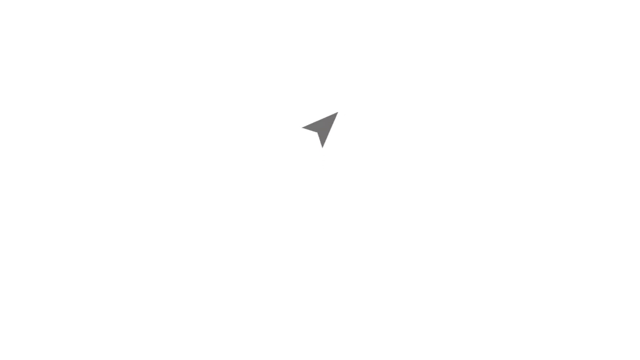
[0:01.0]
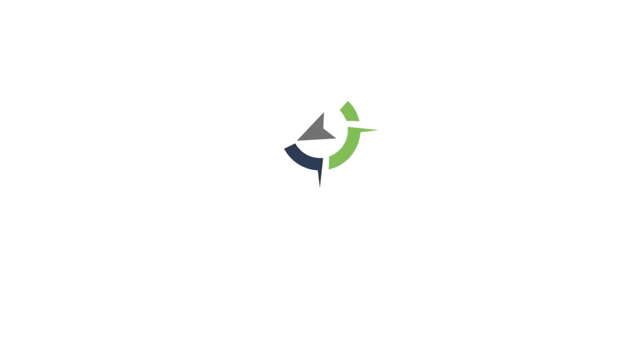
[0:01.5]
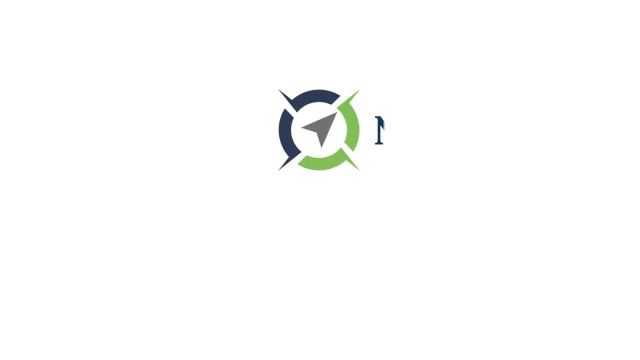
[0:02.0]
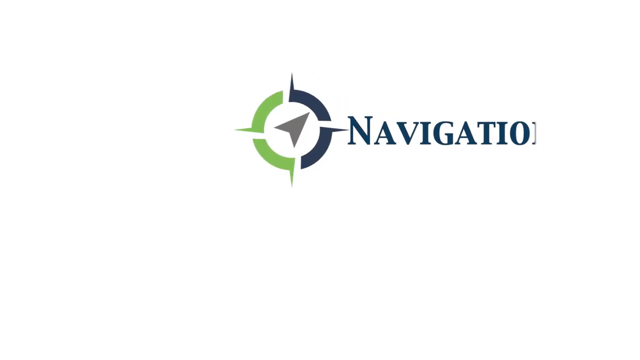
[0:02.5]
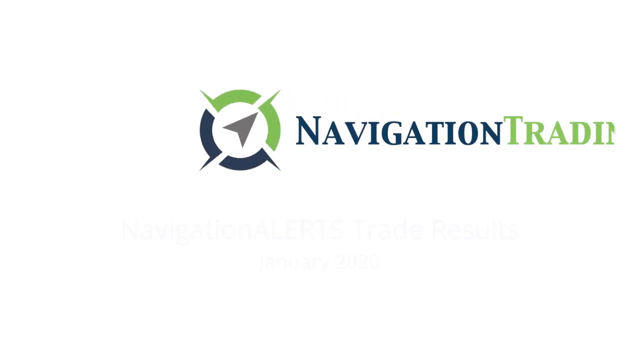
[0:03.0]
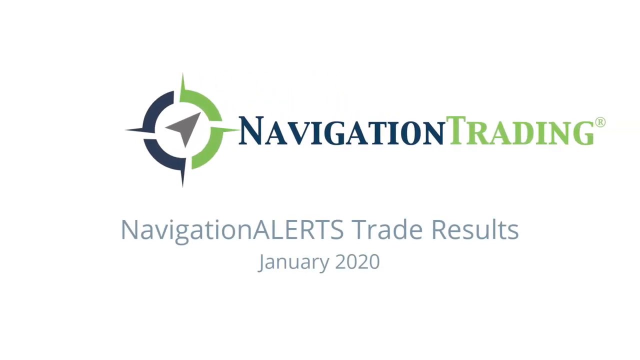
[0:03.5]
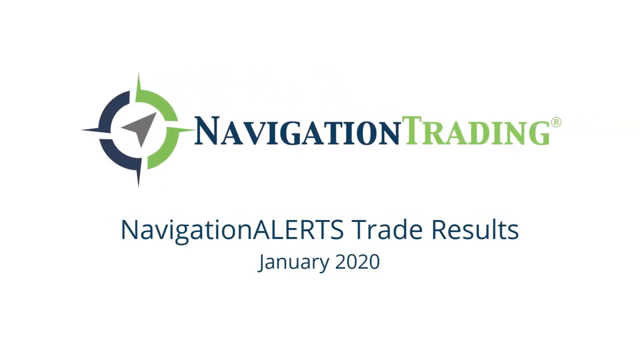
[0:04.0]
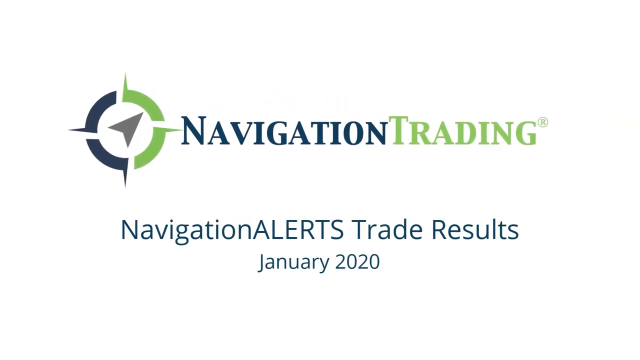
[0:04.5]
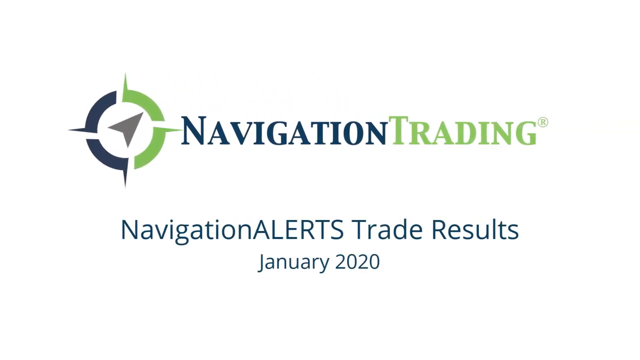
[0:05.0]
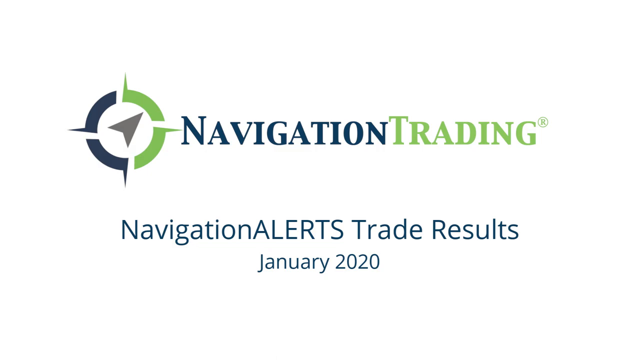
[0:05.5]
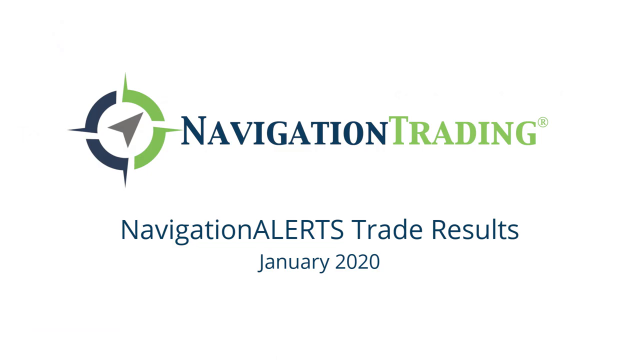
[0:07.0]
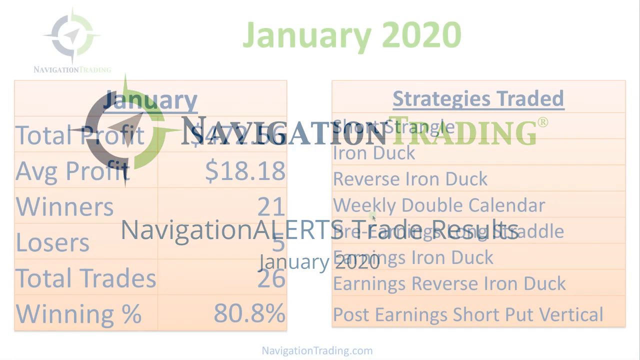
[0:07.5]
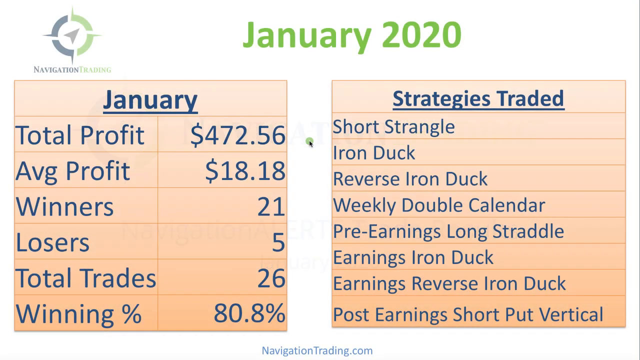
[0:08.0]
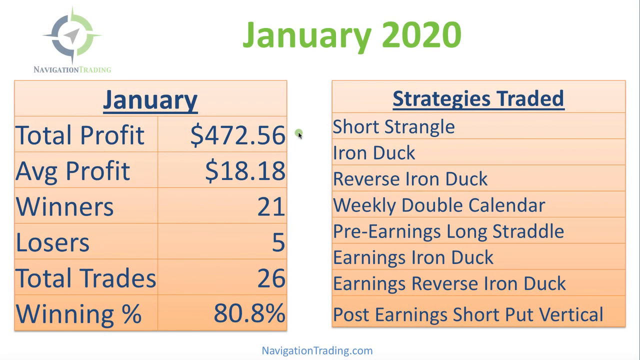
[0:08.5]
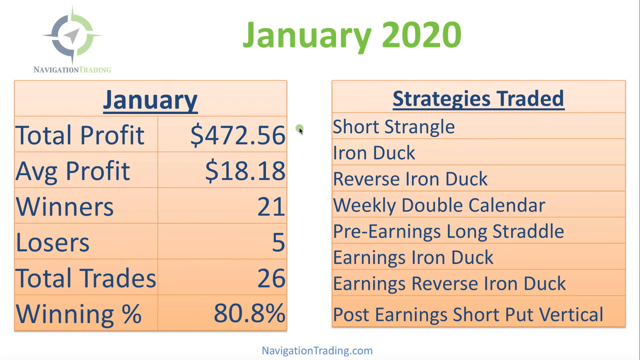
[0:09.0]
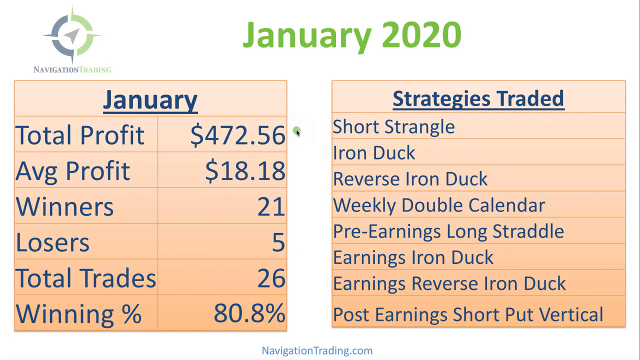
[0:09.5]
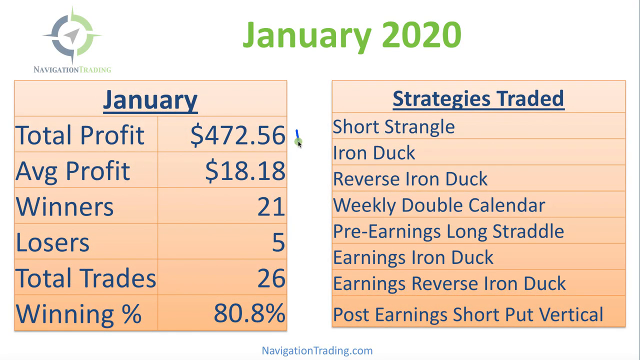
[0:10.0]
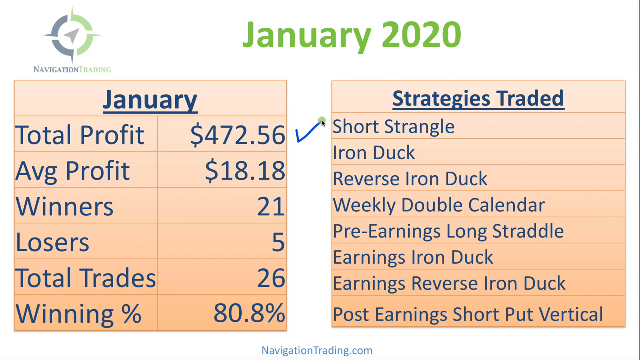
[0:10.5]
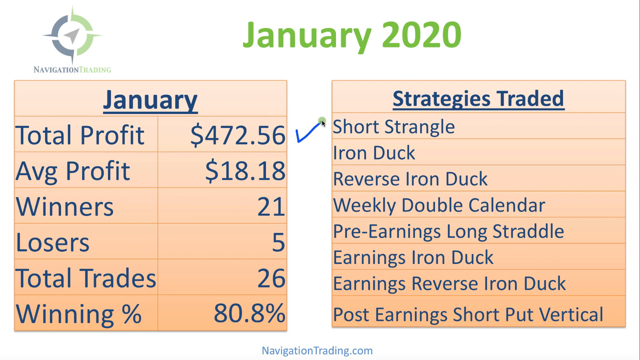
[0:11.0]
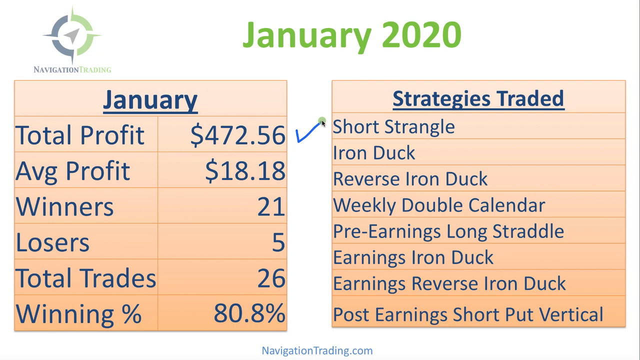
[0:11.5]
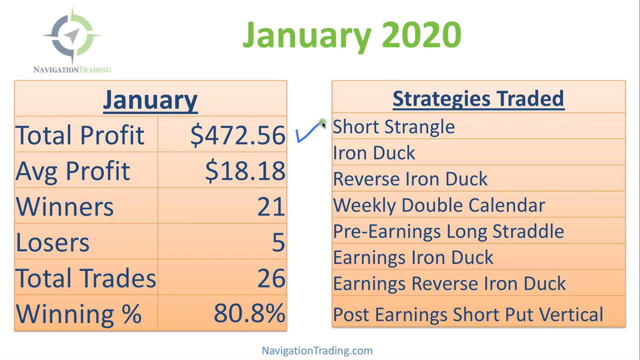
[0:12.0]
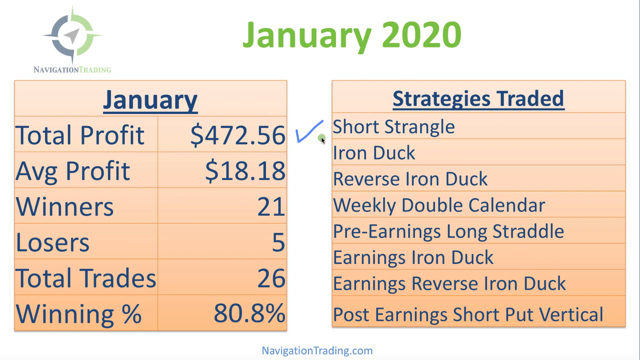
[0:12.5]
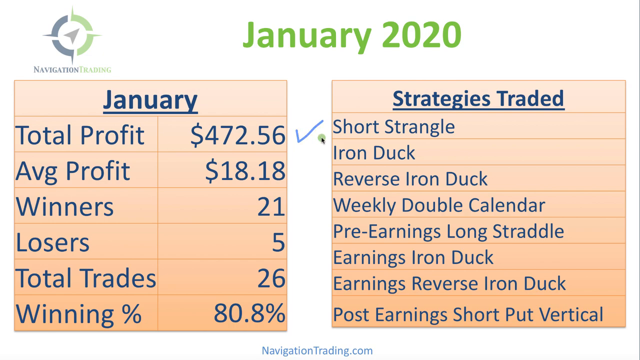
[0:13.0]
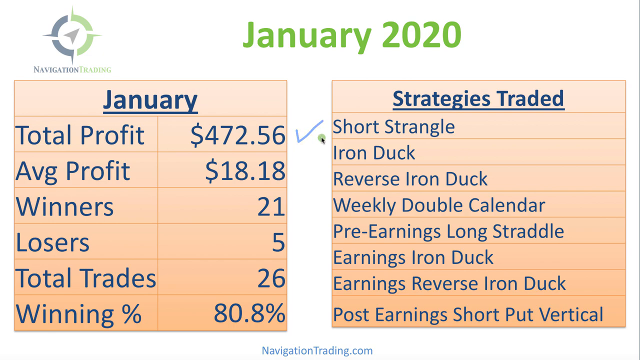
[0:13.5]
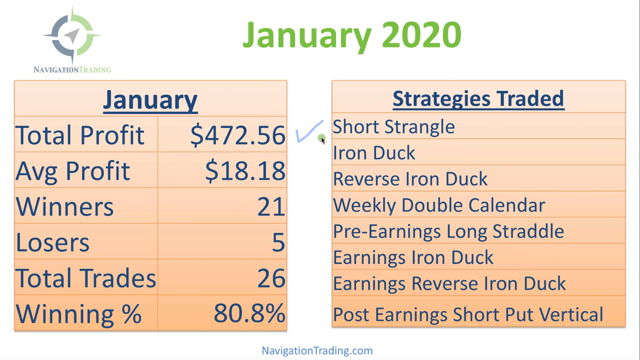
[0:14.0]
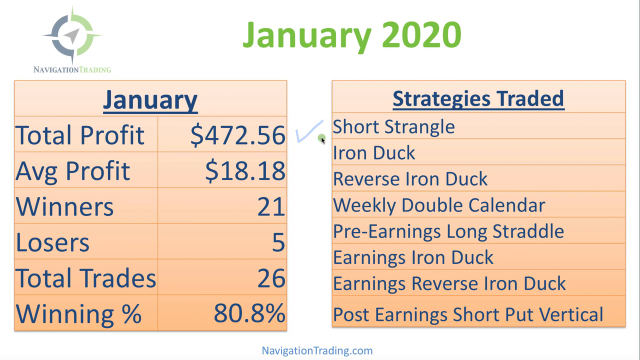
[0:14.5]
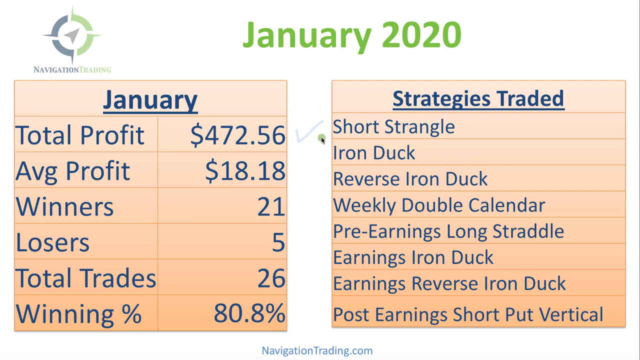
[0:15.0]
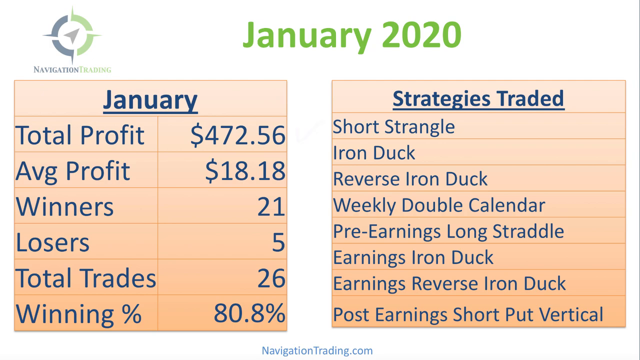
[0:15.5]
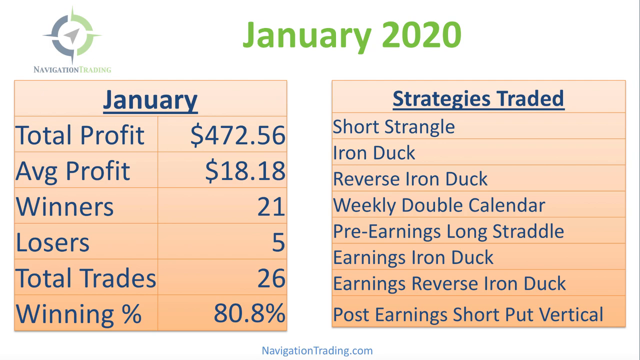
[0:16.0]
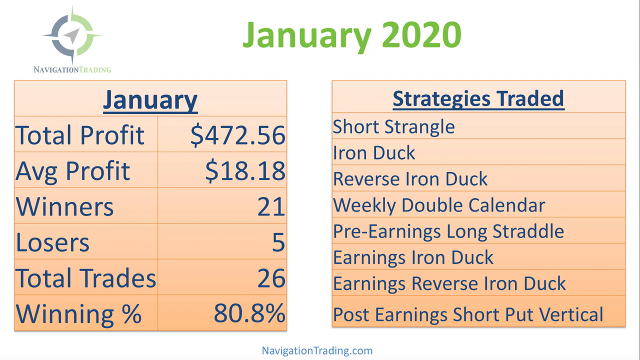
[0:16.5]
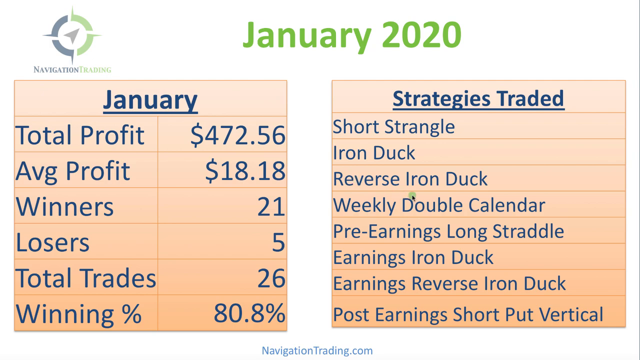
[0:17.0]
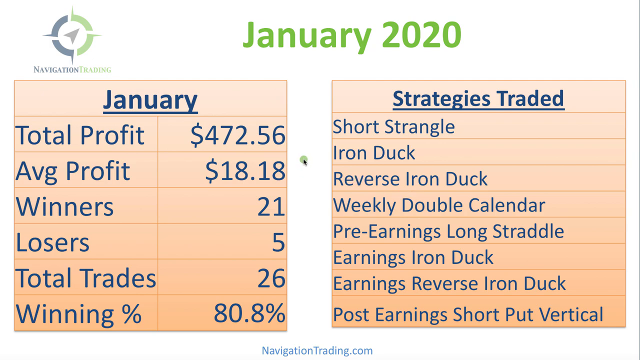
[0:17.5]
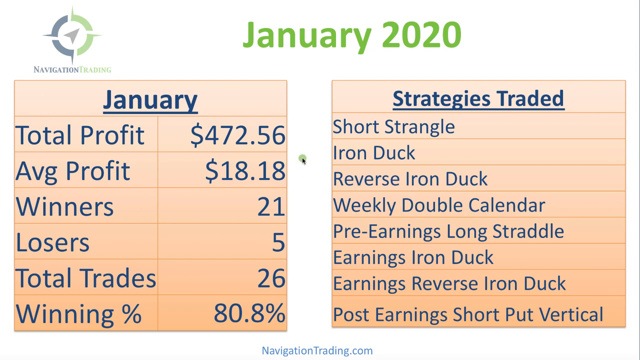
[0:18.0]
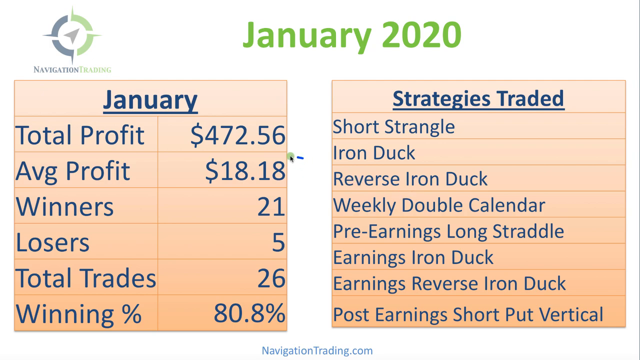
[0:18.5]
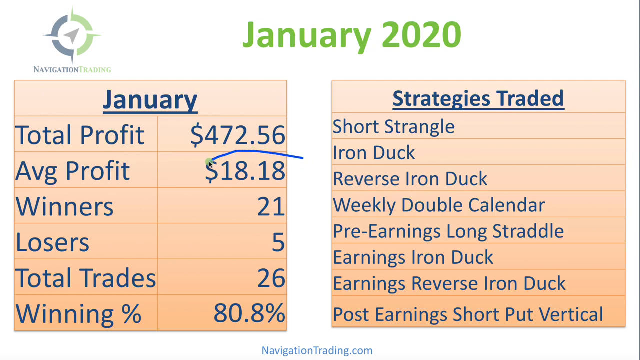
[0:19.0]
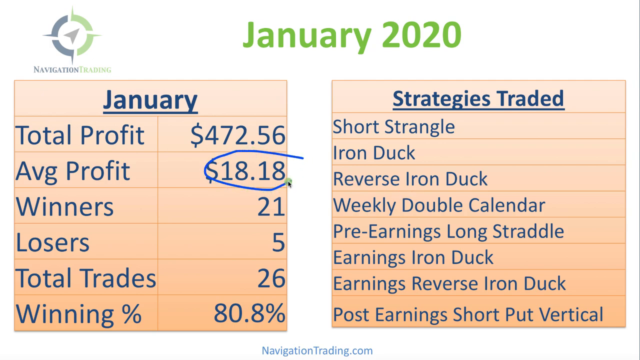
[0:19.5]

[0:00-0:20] A table shows navigation trading results for January 2020. For that time frame it lists total profit, average profit, winners, losers and total trades, along with the strategies traded, such as short strangle, iron dock, reverse iron dock, weekly, double calendar, premium earnings, long straddle, earnings iron dock and earnings reverse iron dock. The information is organized into columns and rows, and a person writes blue check marks into different areas of the list.